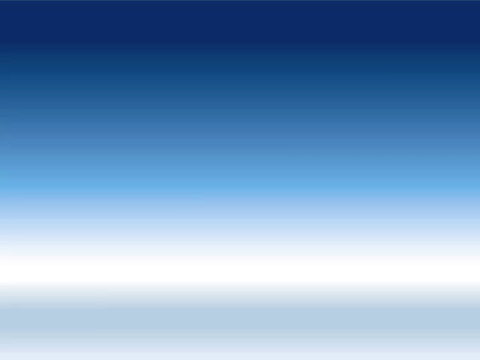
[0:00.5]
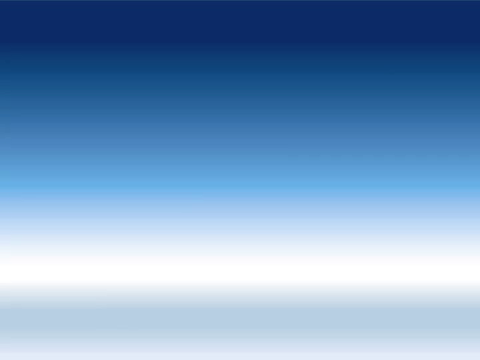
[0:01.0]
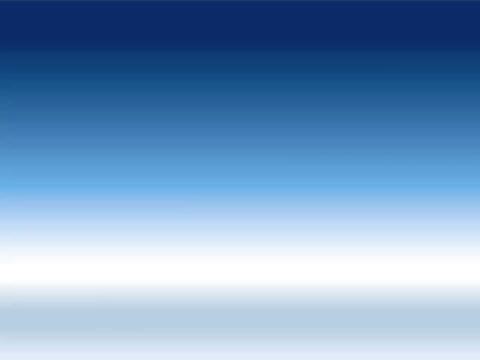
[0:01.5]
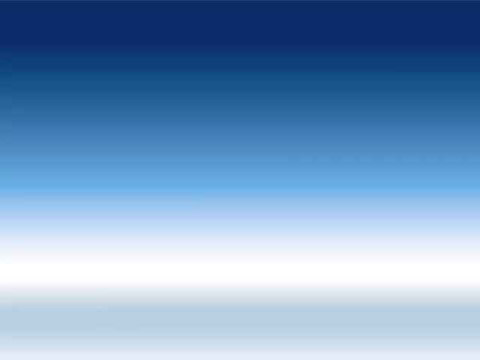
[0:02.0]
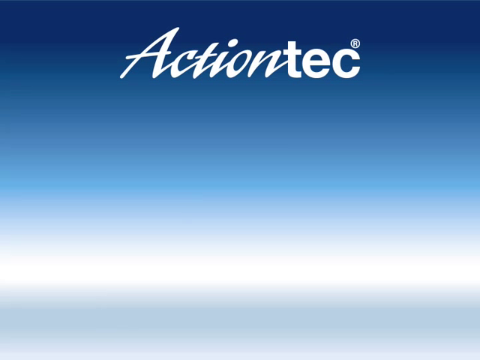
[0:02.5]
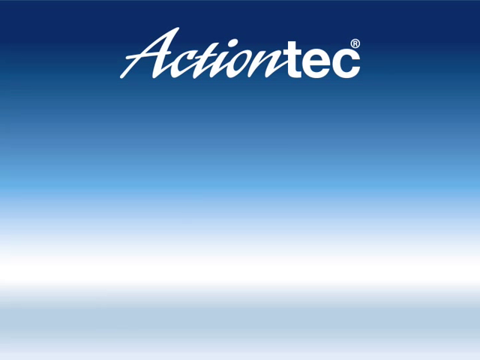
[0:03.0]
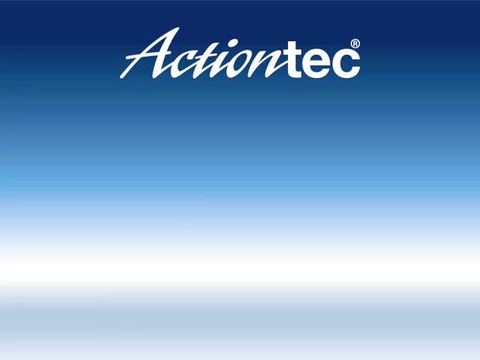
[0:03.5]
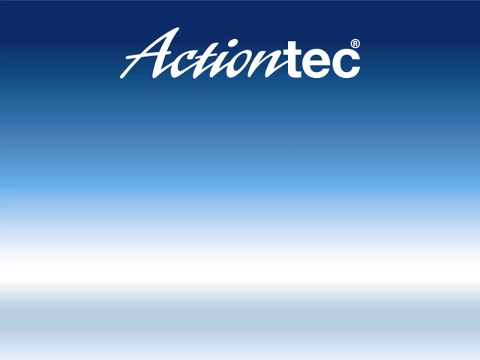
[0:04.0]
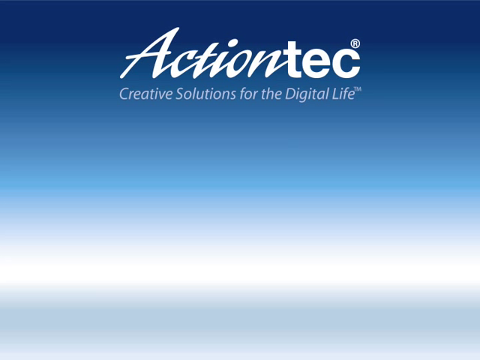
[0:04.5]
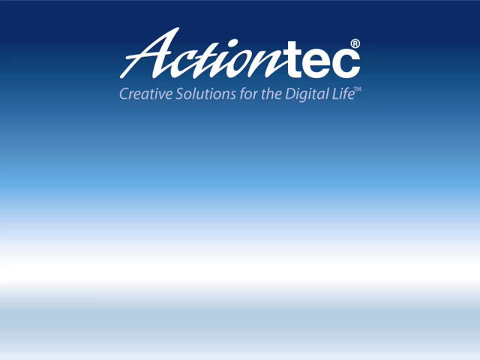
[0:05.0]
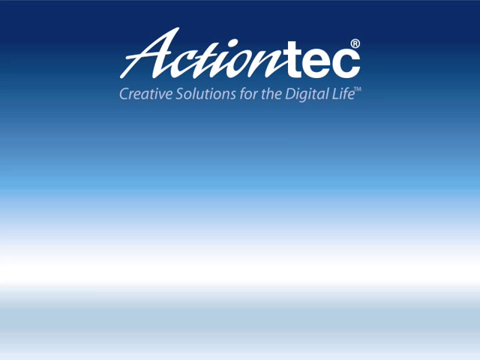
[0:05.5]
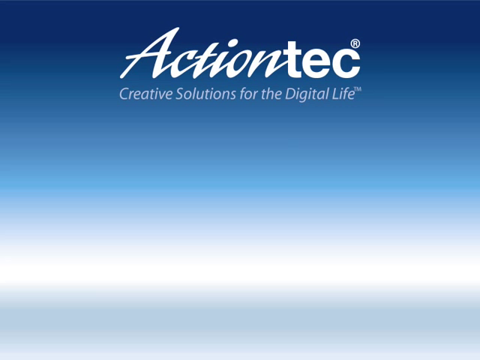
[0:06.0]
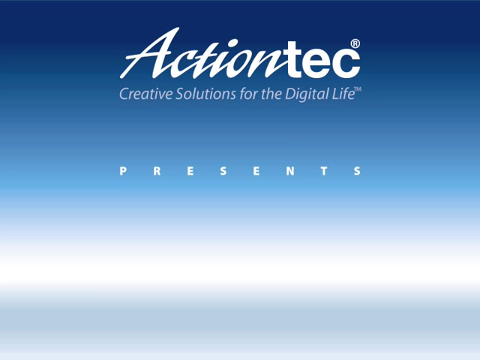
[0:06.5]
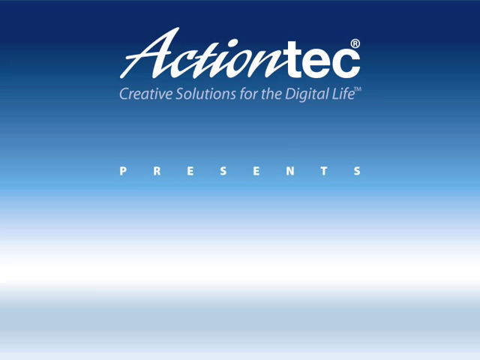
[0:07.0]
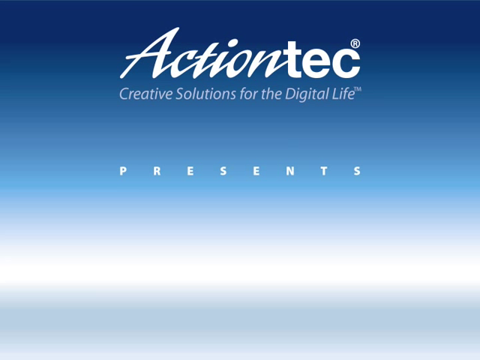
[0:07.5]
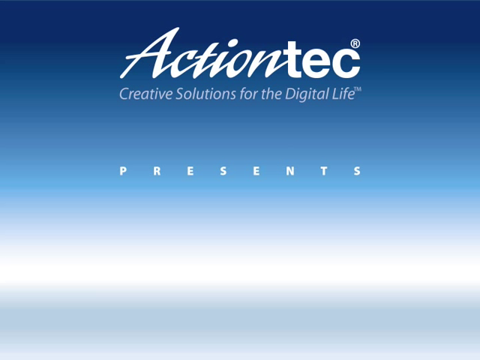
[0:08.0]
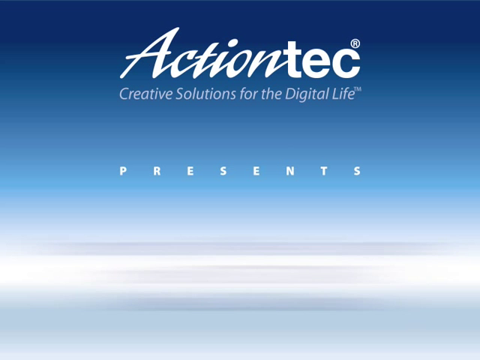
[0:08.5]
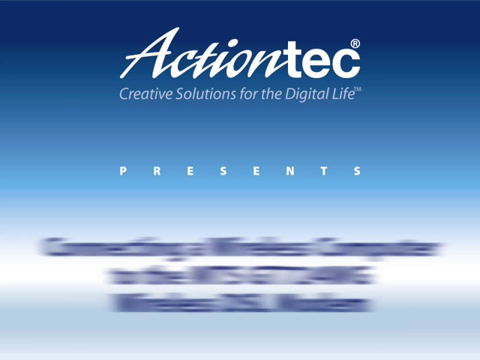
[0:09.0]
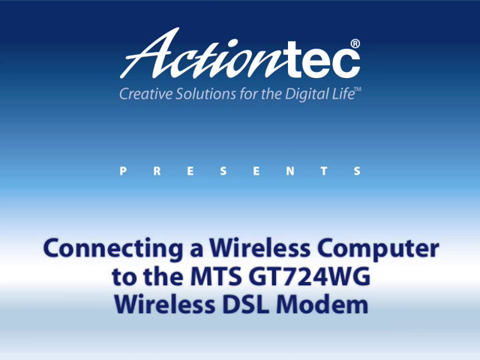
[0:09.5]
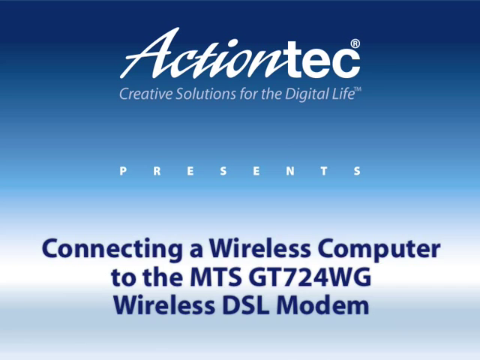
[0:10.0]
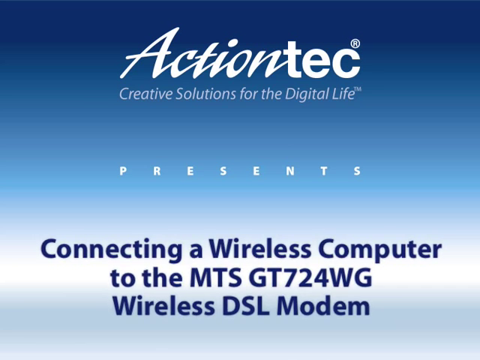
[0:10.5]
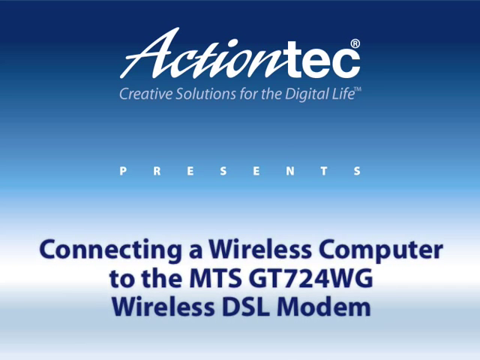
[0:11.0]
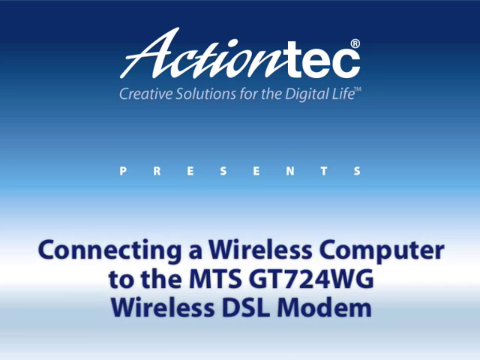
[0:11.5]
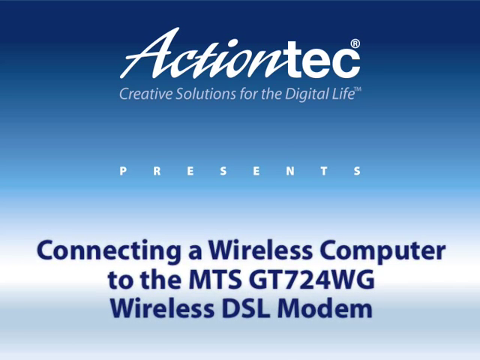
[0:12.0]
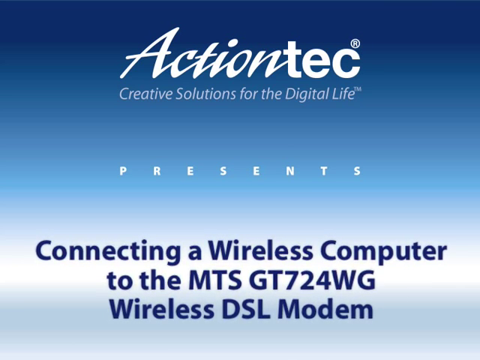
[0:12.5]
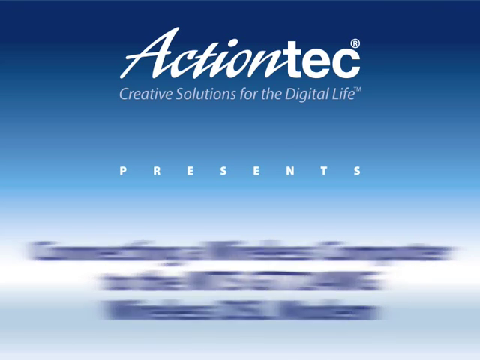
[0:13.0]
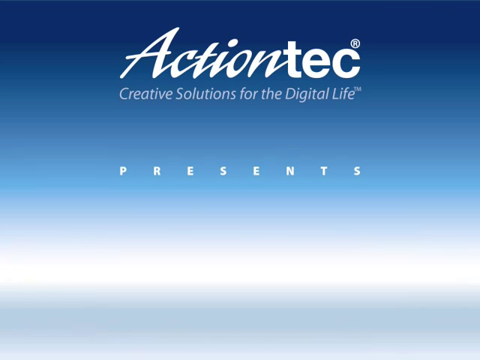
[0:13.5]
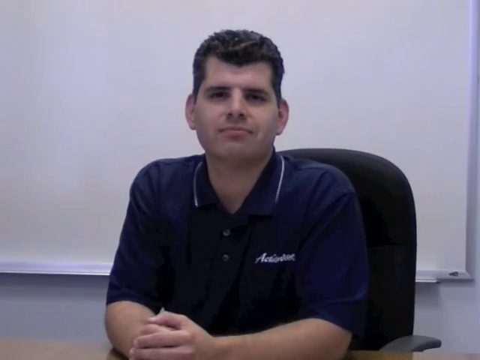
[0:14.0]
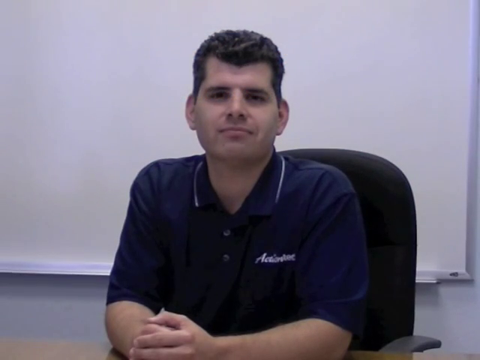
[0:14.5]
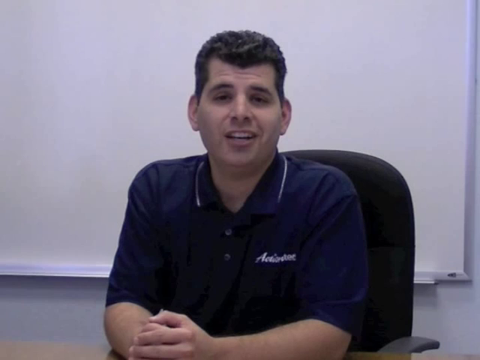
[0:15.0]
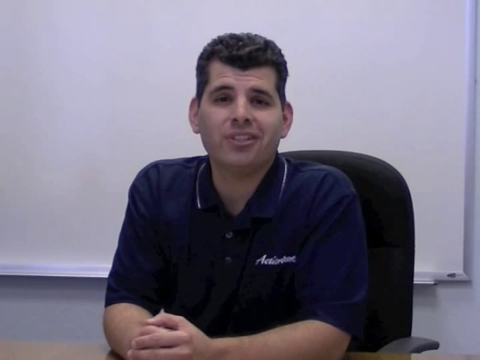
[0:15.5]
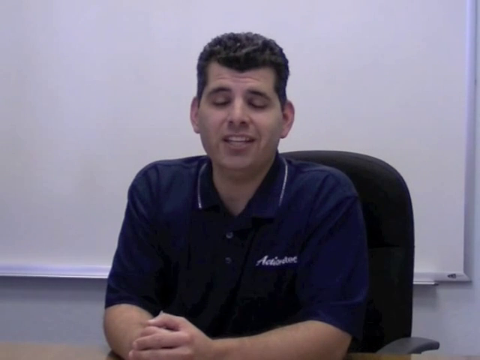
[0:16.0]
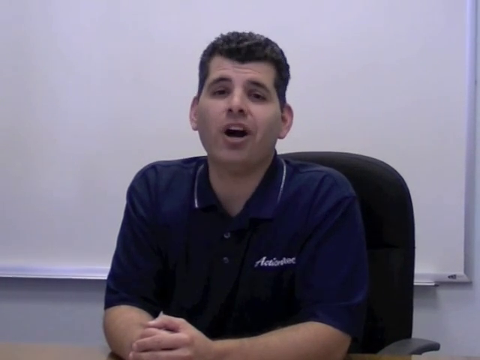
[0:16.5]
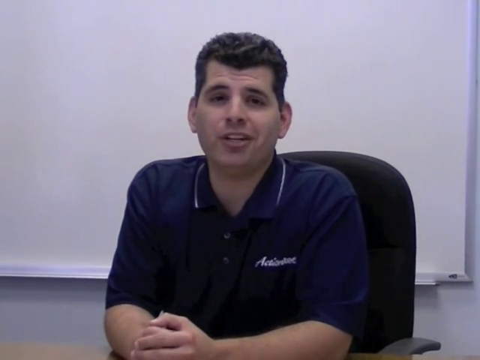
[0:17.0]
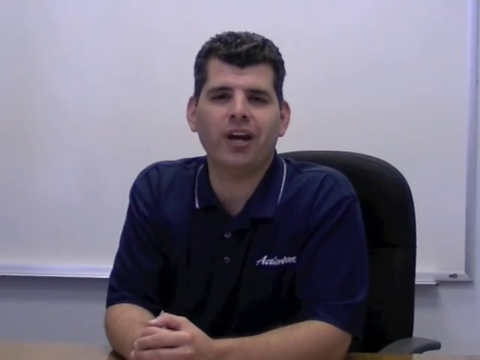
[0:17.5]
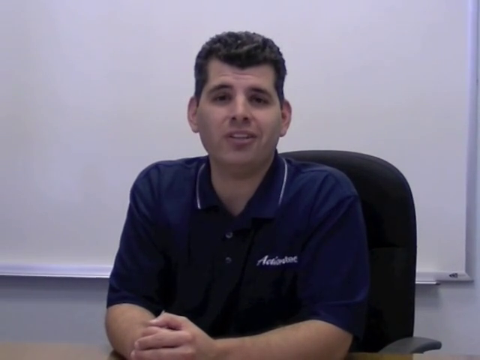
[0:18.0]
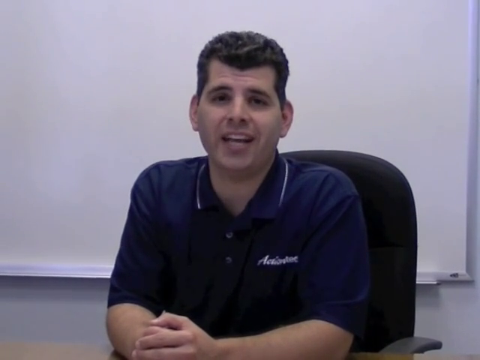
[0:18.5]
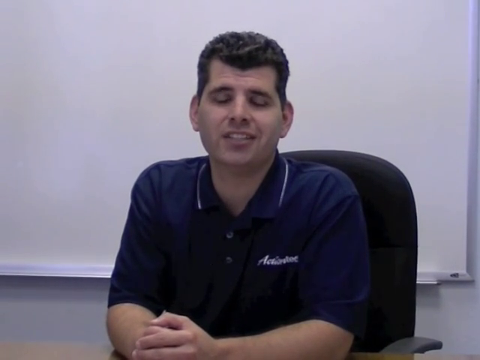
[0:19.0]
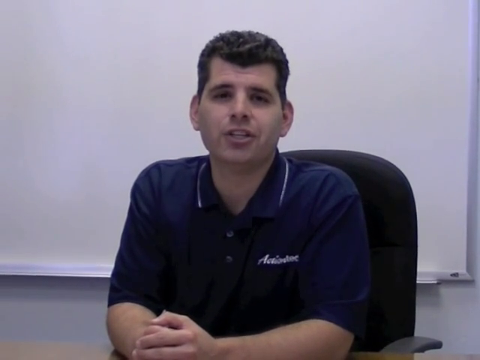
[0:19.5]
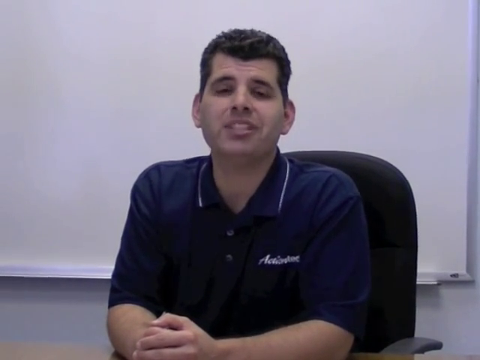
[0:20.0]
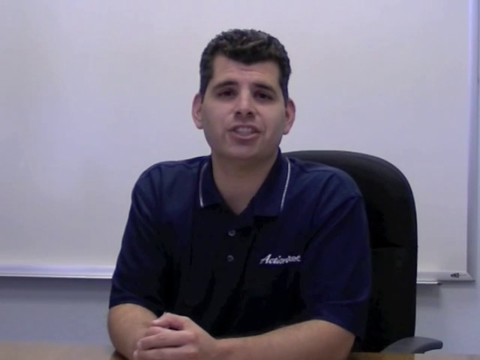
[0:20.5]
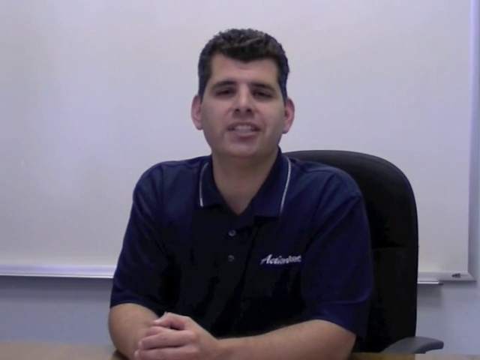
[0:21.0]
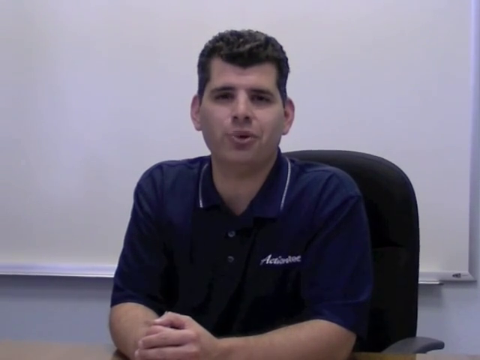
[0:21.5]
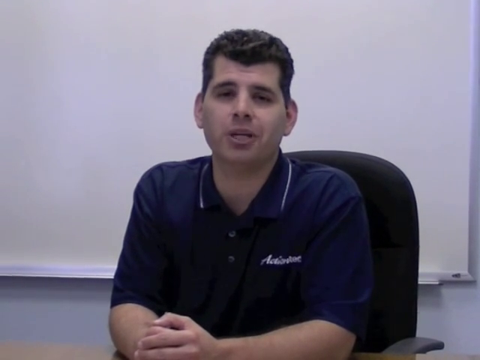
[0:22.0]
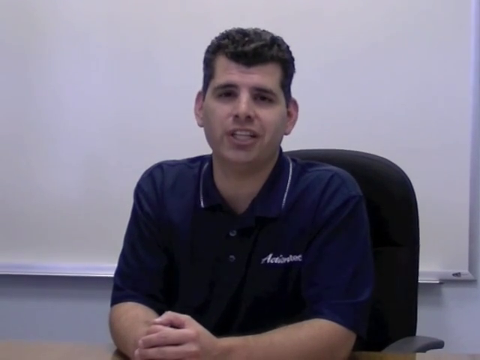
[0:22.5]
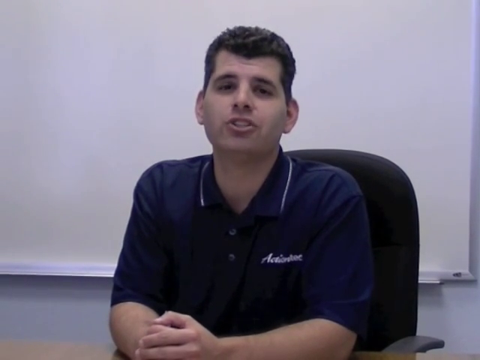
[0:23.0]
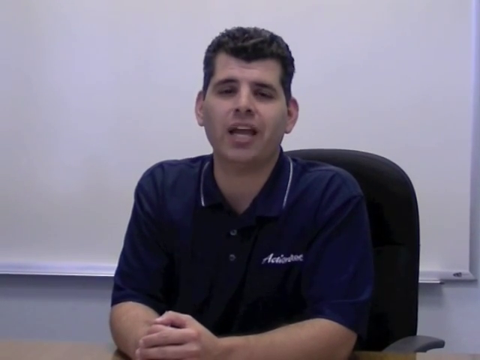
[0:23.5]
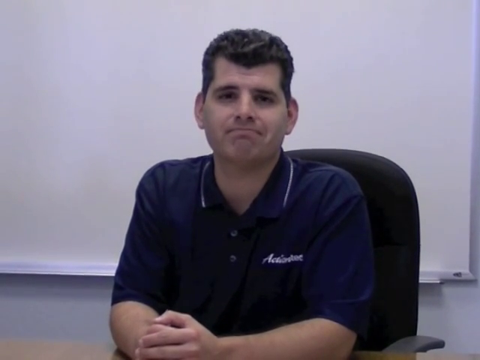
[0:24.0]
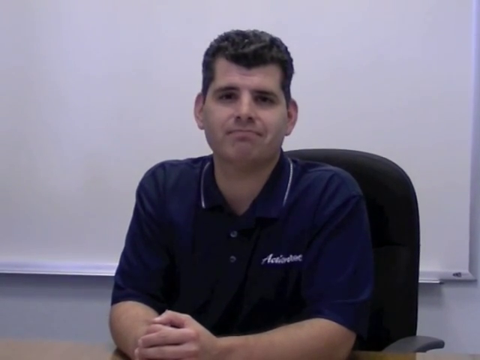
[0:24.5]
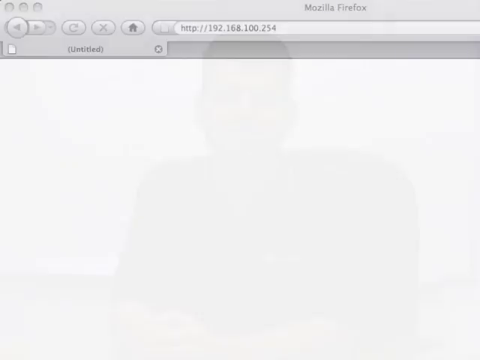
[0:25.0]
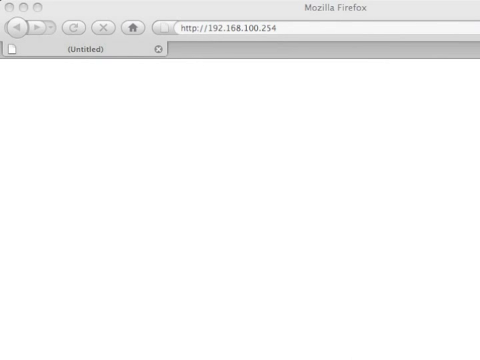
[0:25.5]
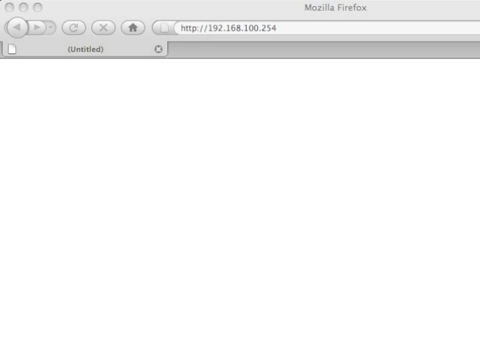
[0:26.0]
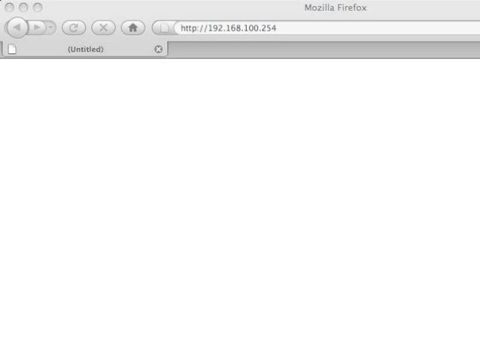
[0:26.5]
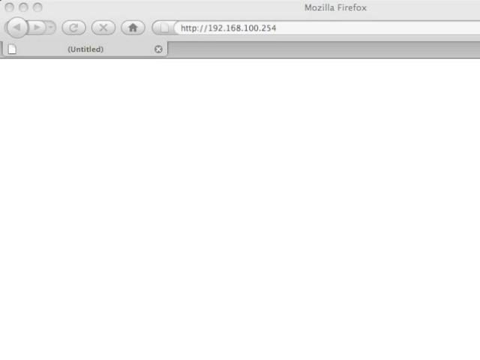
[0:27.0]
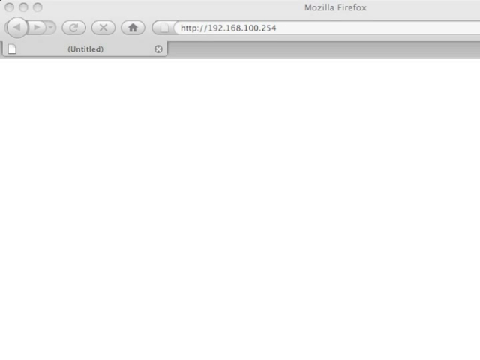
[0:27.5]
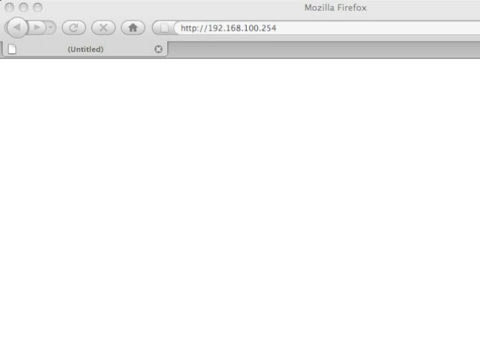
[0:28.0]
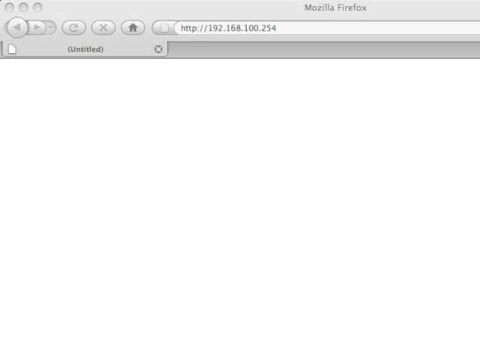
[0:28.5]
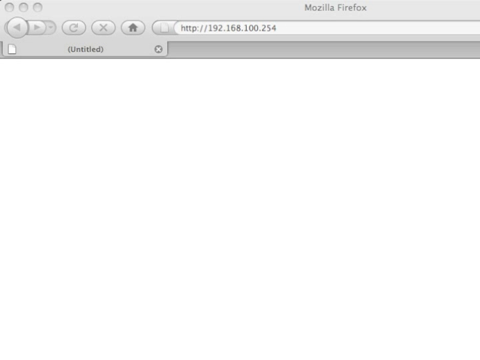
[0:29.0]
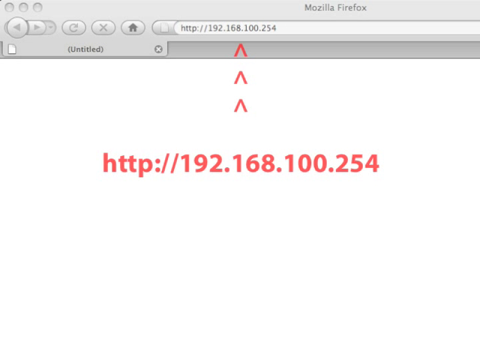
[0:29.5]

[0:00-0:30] The video opens on a gradient background that goes from dark blue and fades into white towards the bottom of the screen. Text appears line by line. The first line is "Actiontec," a logo in bold white font. Below it a second line appears reading "Creative Solutions for the Digital Life." A few lines further down, white text reads "Presents." Then, at the very bottom of the screen, three lines of navy blue text appear: "Connecting a Wireless Computer to the MTS GT724WG Wireless DSL Modem." The video transitions to a man sitting in an office chair with a whiteboard behind him. He wears a blue polo shirt with the Actiontec logo embroidered on the left pocket and talks towards the camera. Next, a computer screen shows a Mozilla Firefox browser with an IP address loaded in the search bar, and red text at the bottom of the screen repeats the IP address.